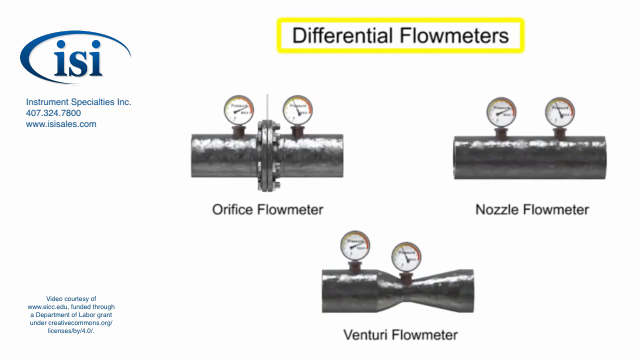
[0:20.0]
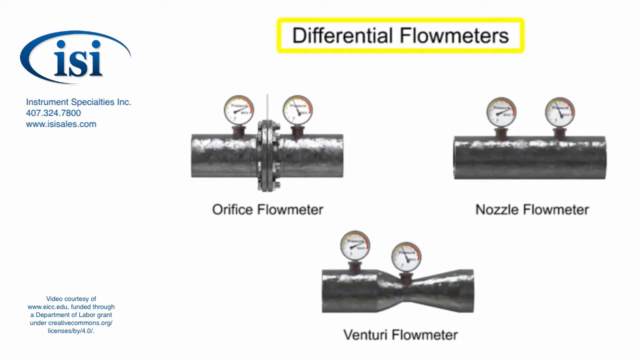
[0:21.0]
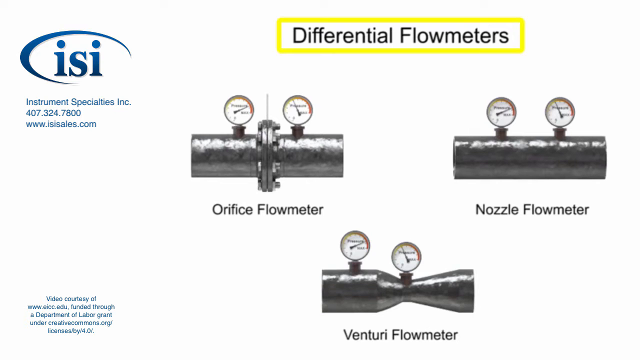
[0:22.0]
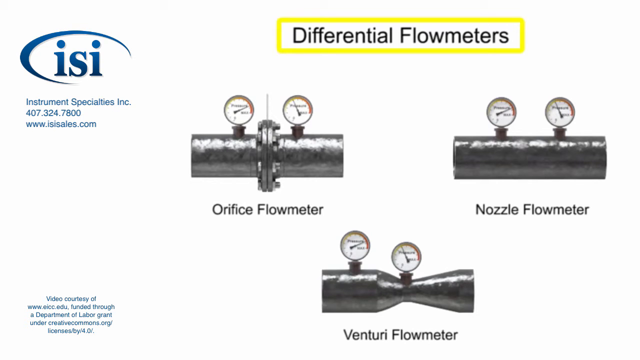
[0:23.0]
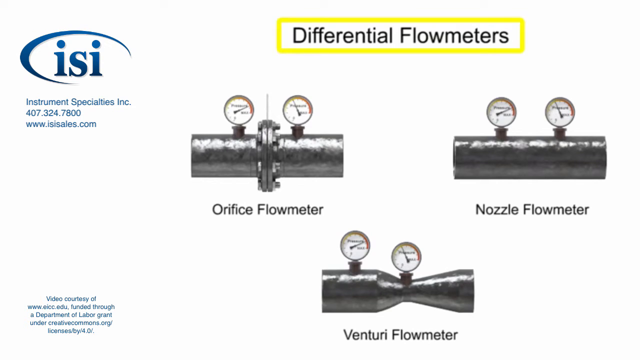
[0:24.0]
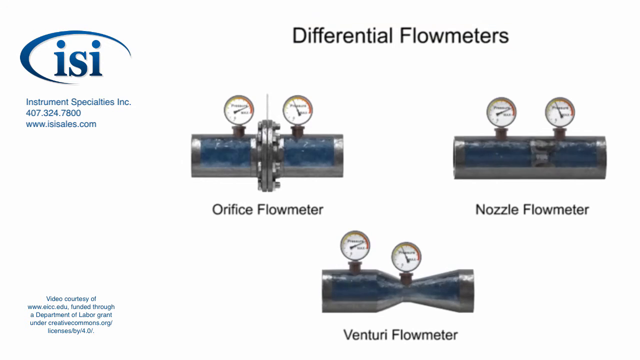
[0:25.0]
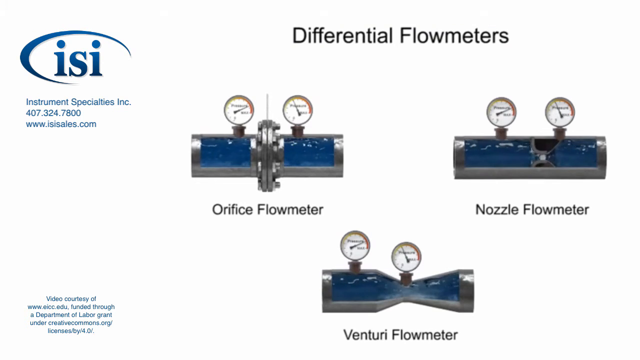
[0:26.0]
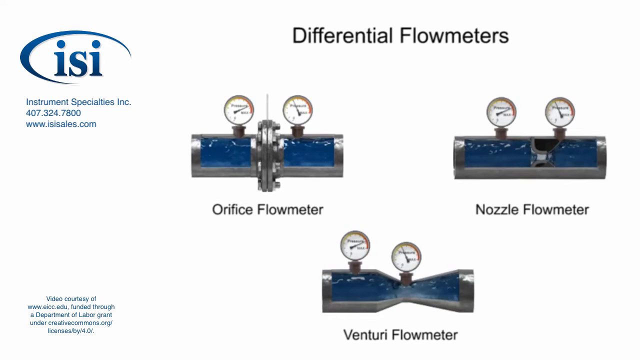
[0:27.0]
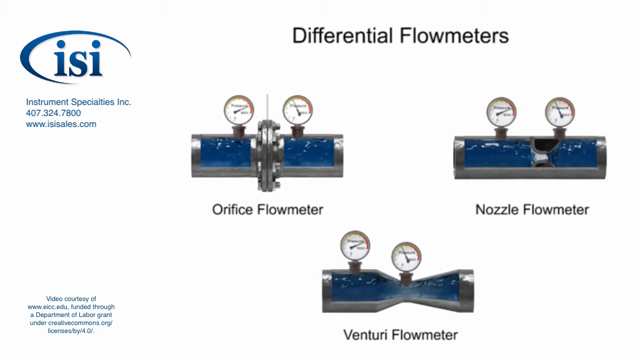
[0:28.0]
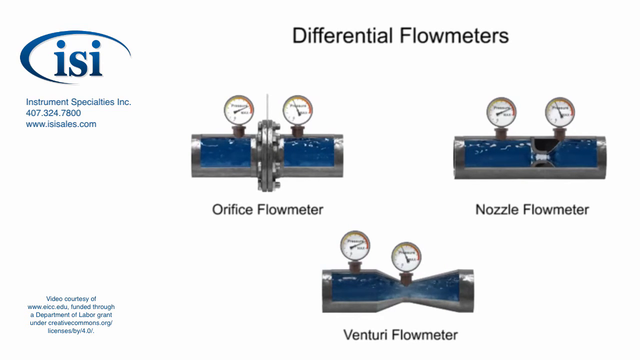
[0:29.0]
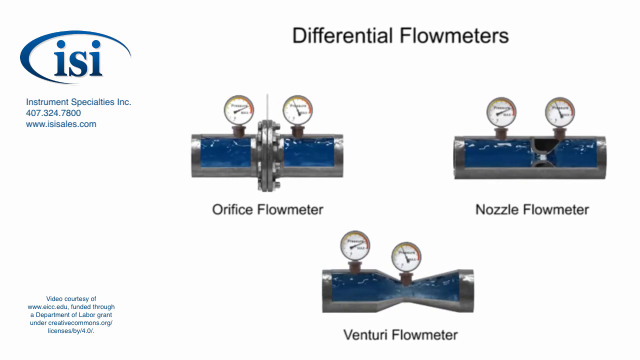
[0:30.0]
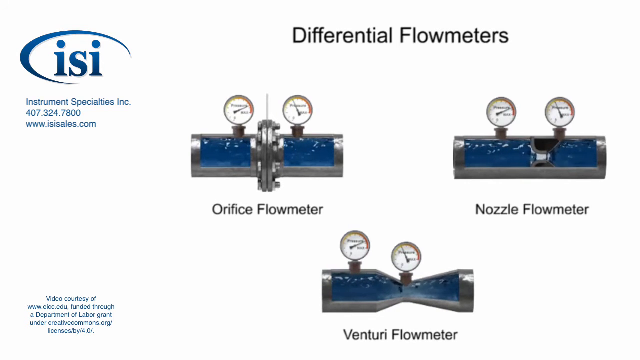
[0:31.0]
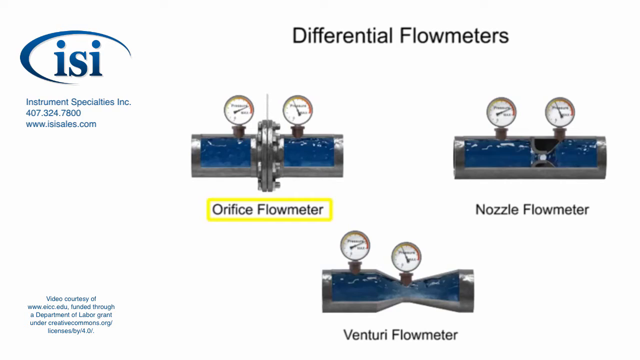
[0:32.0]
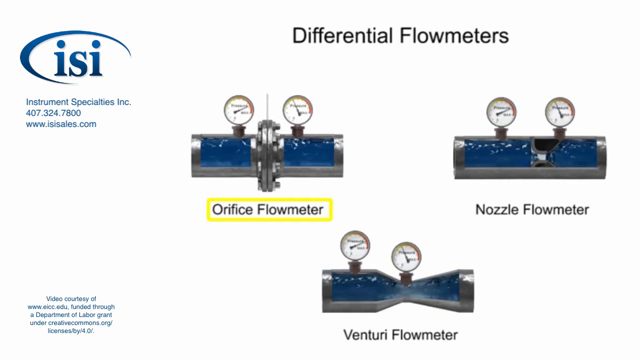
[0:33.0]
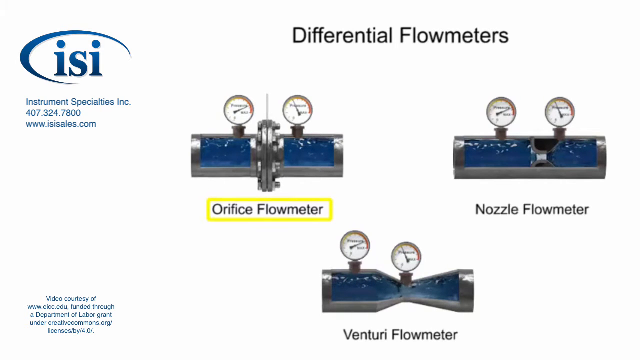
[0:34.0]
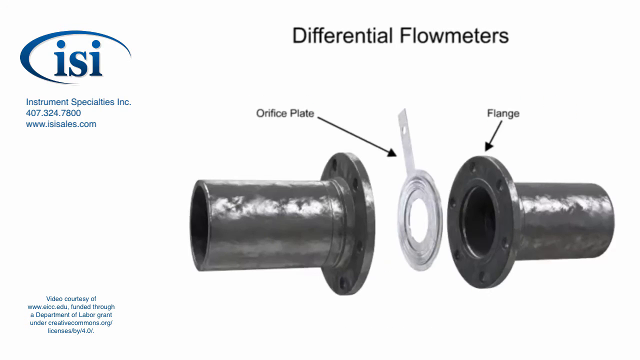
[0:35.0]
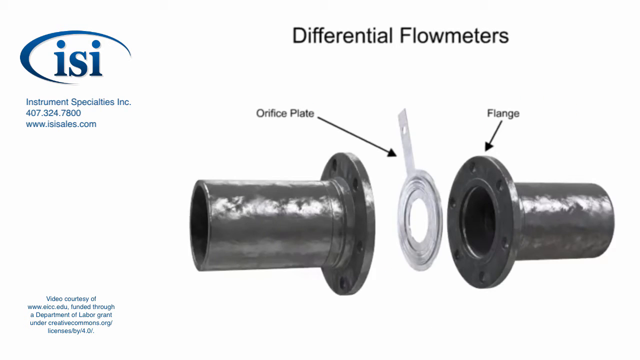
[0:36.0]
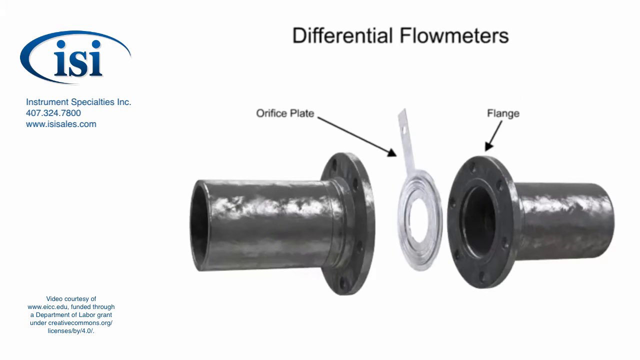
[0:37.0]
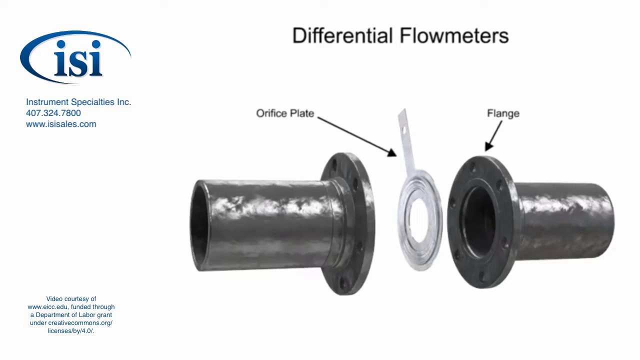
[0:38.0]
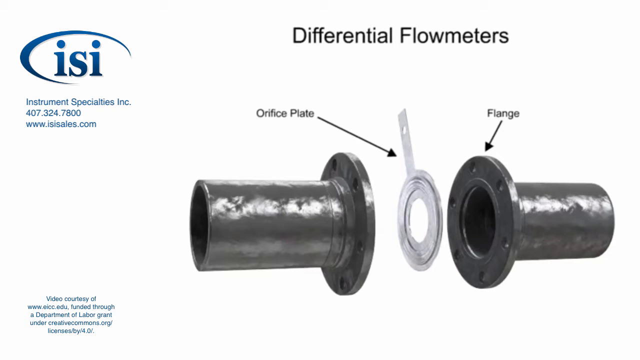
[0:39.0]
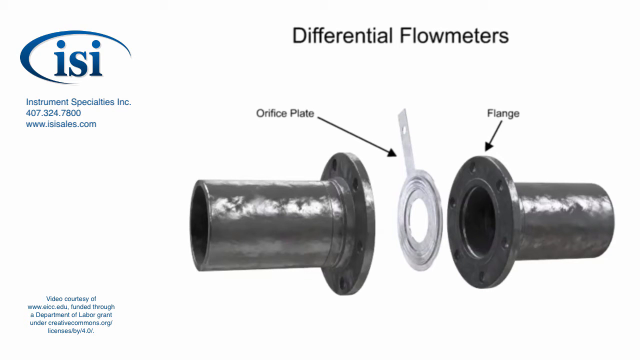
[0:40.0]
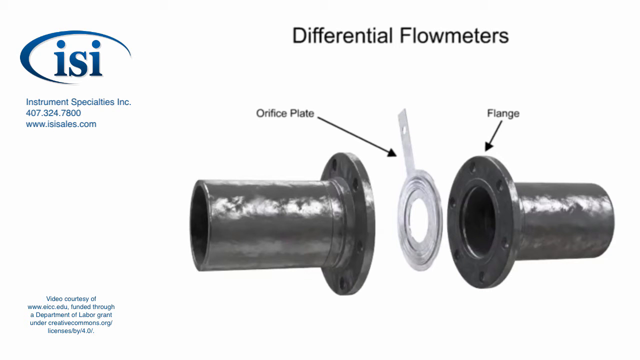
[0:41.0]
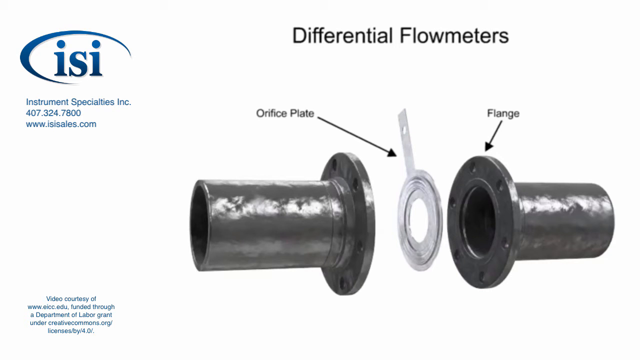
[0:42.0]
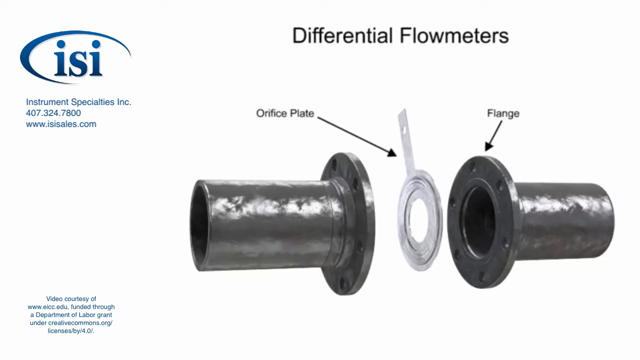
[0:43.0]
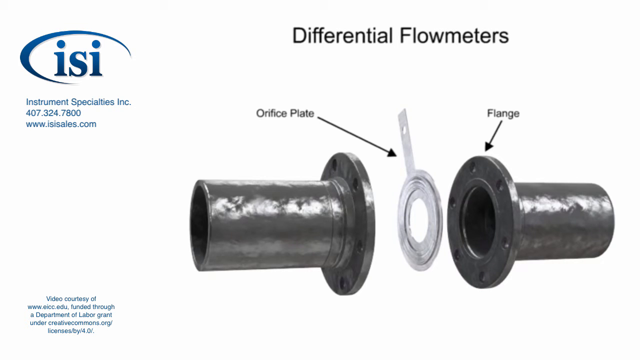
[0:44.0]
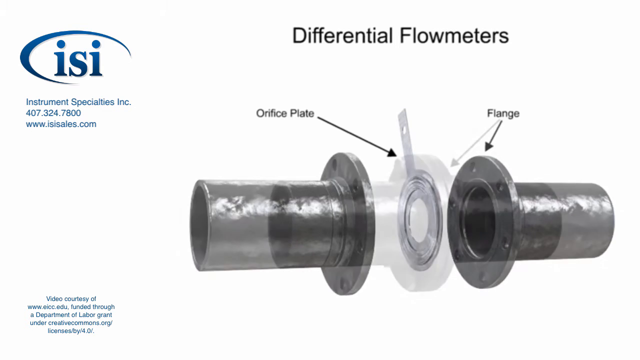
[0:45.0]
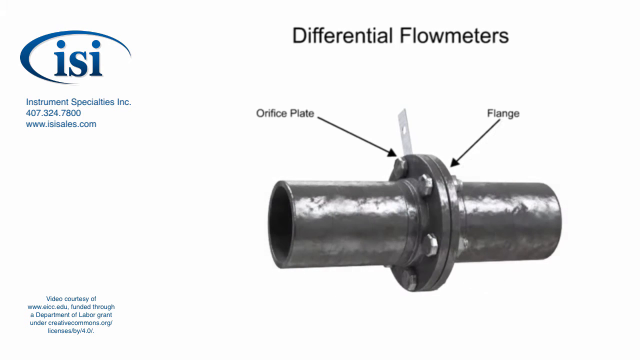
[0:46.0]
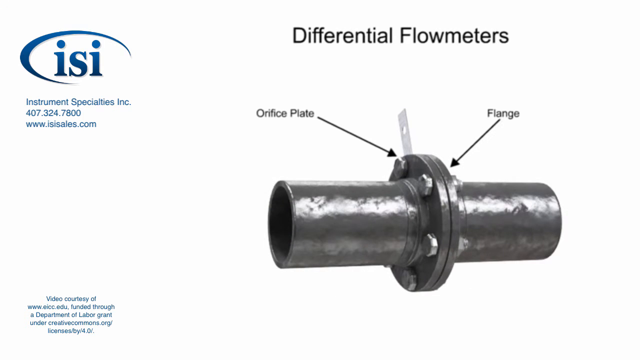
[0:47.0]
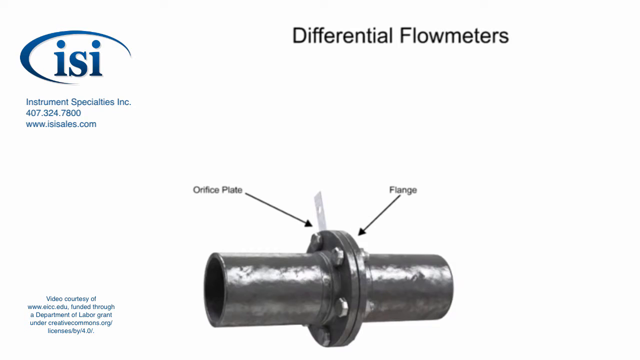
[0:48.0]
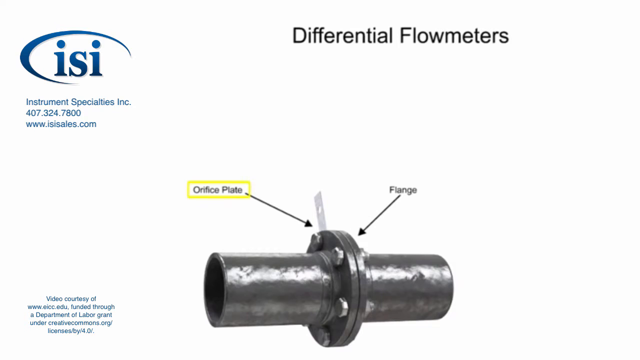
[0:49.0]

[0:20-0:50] On a white background, the ISI logo is in the top left corner. Below it the text reads "Instrument Specialties, Inc.", then a number, "407.324.7800", and below that a website, "www.isicells.com". At the top, sort of in the middle to the right of the screen, it says "Differential Flow Meters", surrounded by a yellow rectangle. There are three pipes on the screen. The pipe on the left is like two pipes clamped together with screws, with two meters on top of it. To its right is a solid pipe with two gauges on top. There is a pipe on the bottom that sort of looks like a riflescope, with two gauges on it. The sides of the pipes disappear and an animation shows blue water flowing from left to right through all the pipes. "Orifice flow meter", underneath the pipe on the left, is surrounded by a yellow rectangle. Then a depiction of this pipe appears: it looks like two pipes, each with a flat end facing the other in the center of the screen, with an orifice plate in the center. The orifice plate sort of looks like a circle with a tongue coming off of it. The flat parts of the pipe with lips on them are called a flange. The animation shows the two flanges going together with the orifice plate sticking out, and the orifice plate is surrounded by a yellow rectangle.